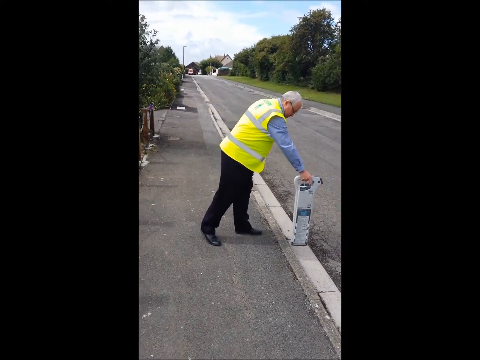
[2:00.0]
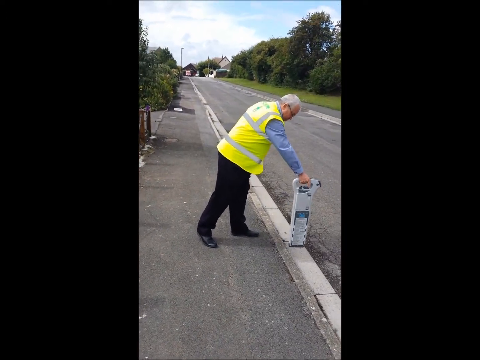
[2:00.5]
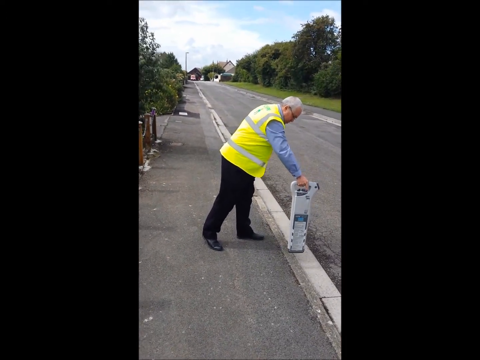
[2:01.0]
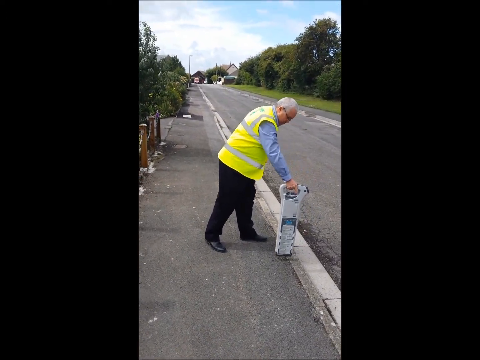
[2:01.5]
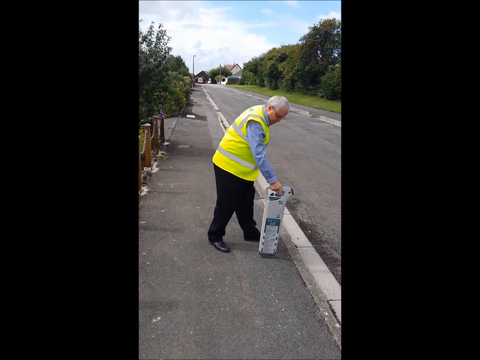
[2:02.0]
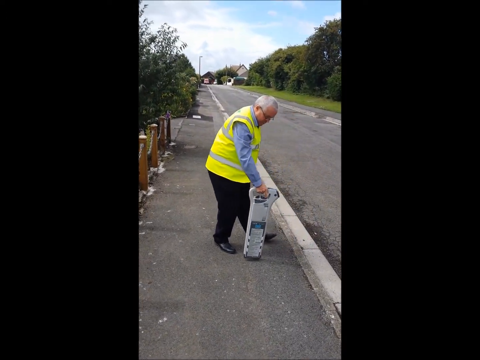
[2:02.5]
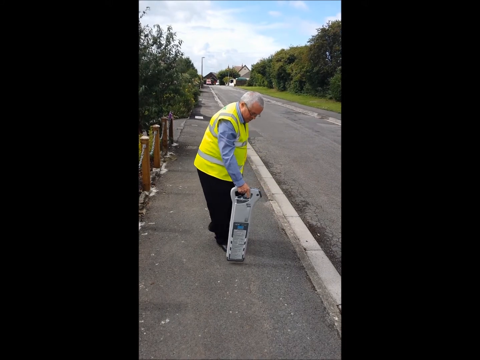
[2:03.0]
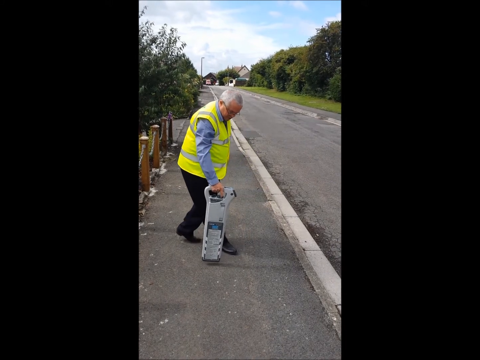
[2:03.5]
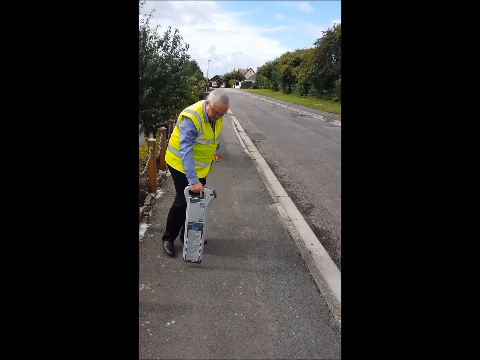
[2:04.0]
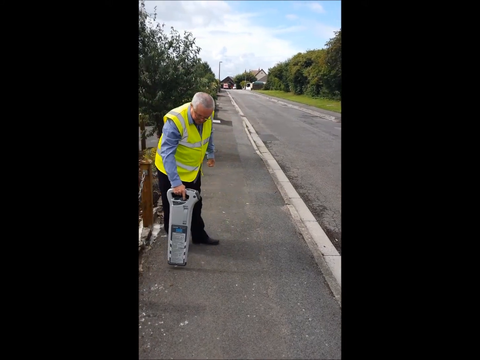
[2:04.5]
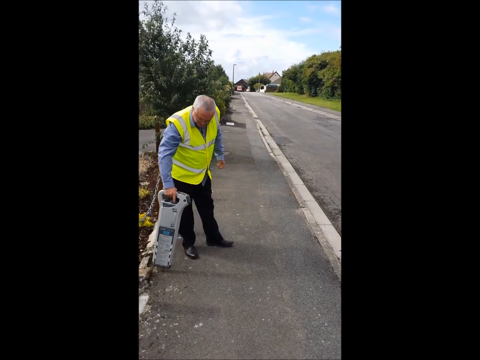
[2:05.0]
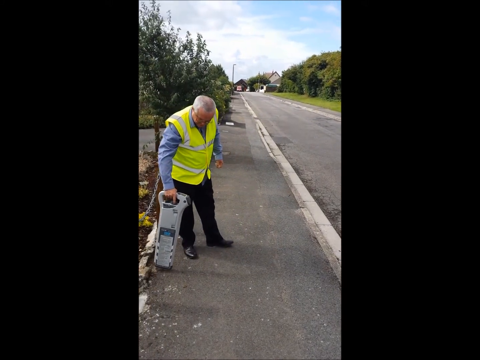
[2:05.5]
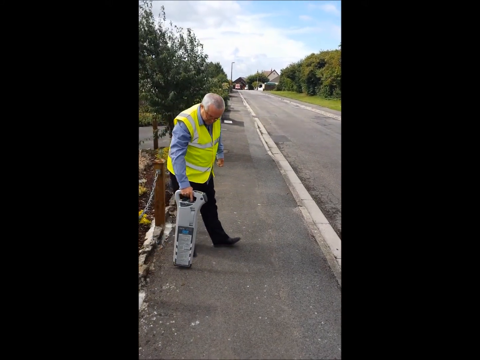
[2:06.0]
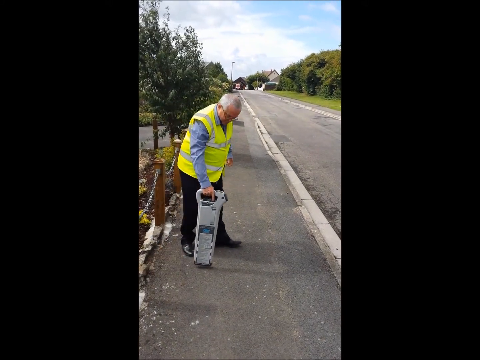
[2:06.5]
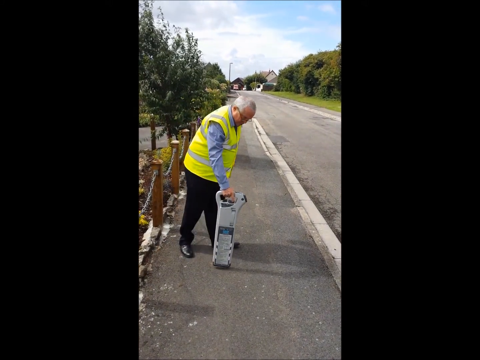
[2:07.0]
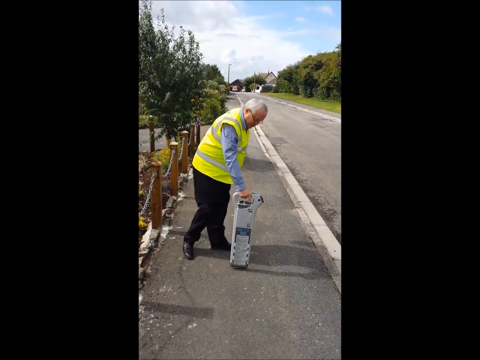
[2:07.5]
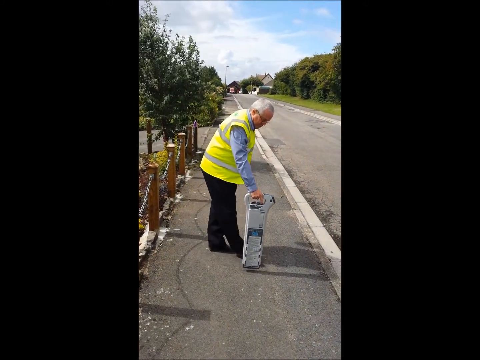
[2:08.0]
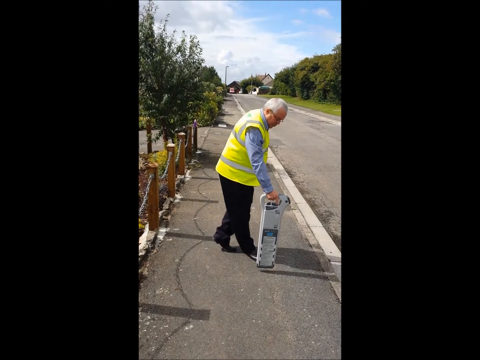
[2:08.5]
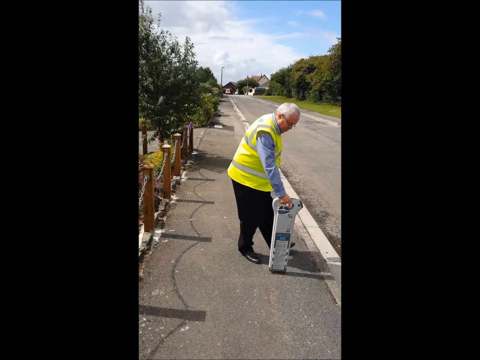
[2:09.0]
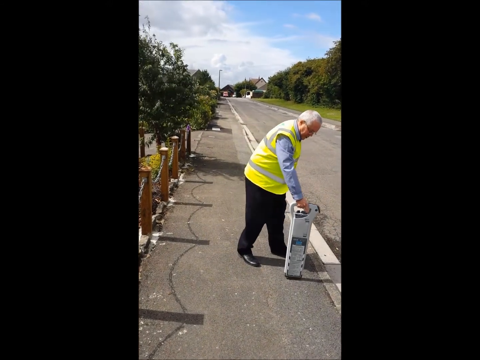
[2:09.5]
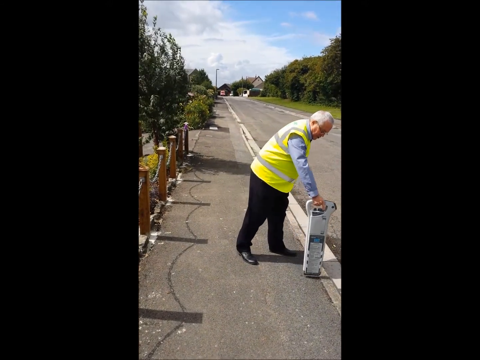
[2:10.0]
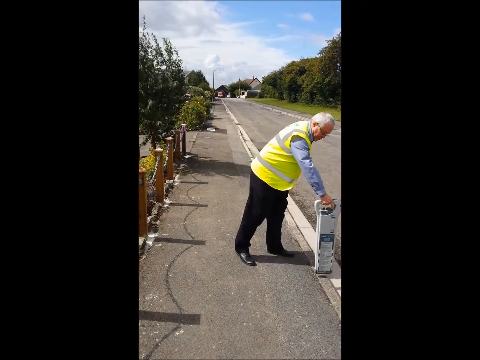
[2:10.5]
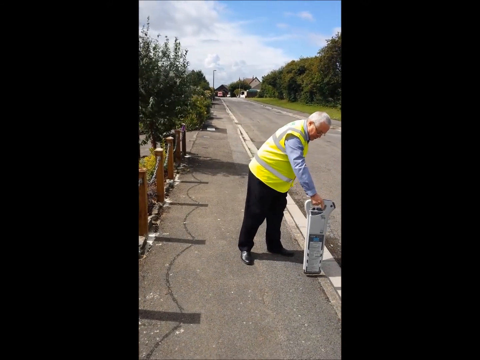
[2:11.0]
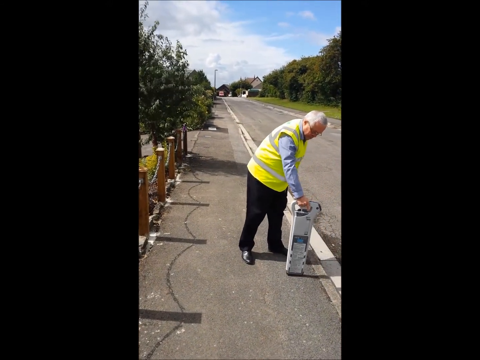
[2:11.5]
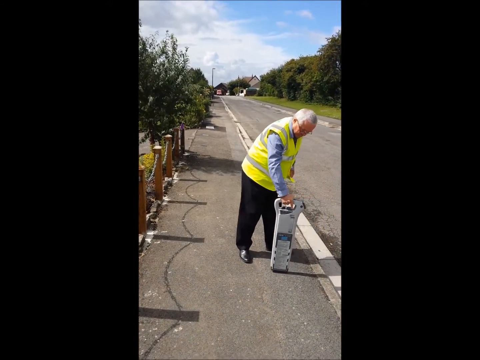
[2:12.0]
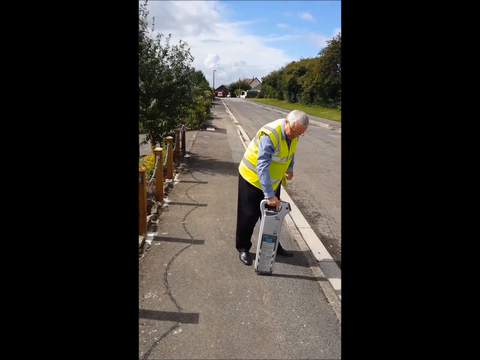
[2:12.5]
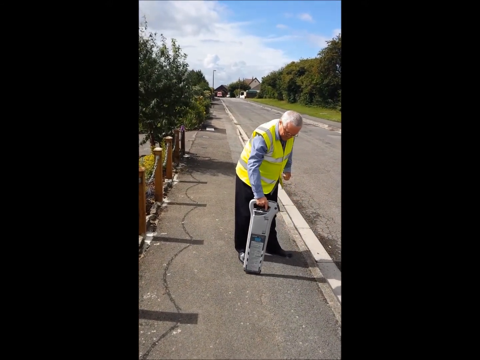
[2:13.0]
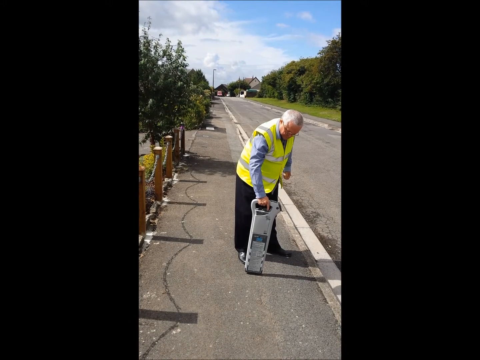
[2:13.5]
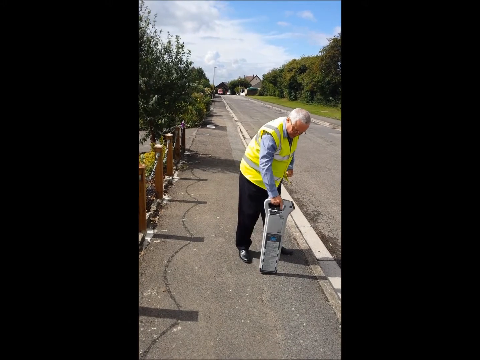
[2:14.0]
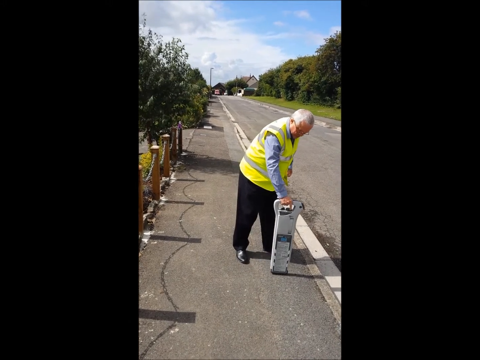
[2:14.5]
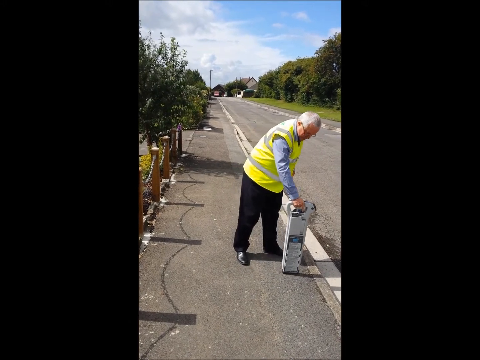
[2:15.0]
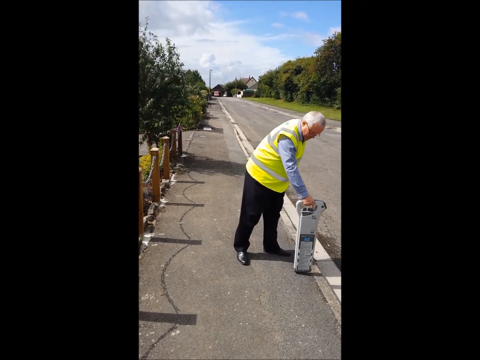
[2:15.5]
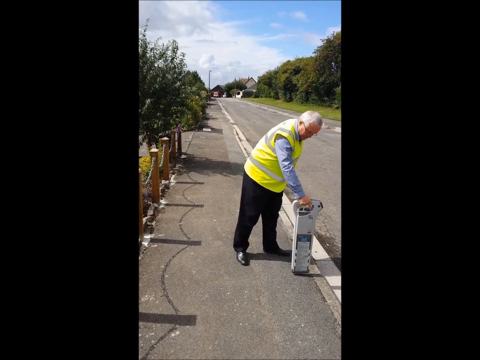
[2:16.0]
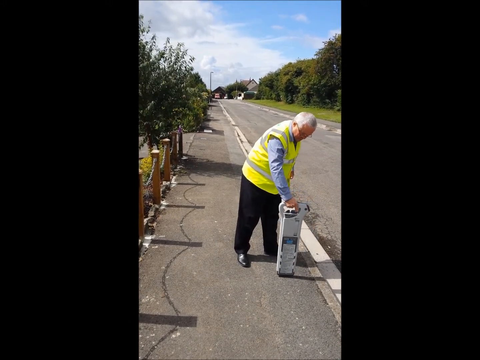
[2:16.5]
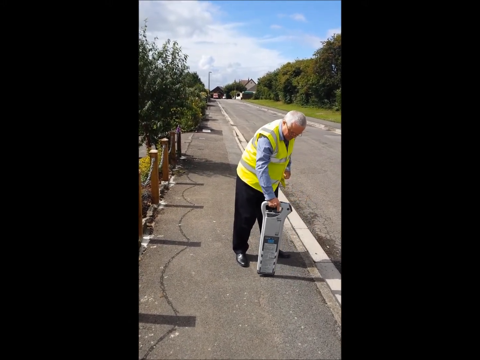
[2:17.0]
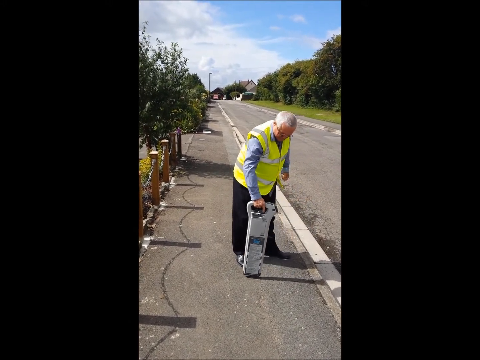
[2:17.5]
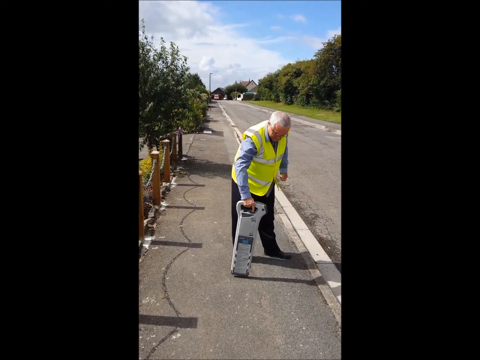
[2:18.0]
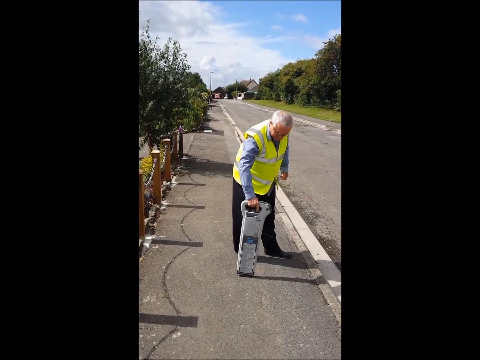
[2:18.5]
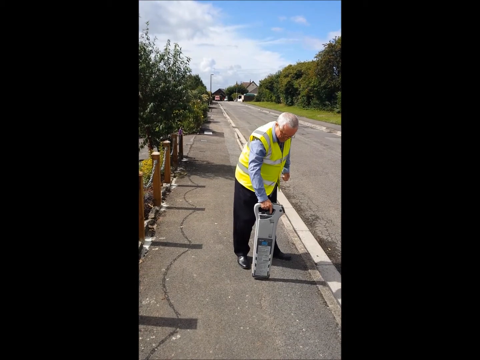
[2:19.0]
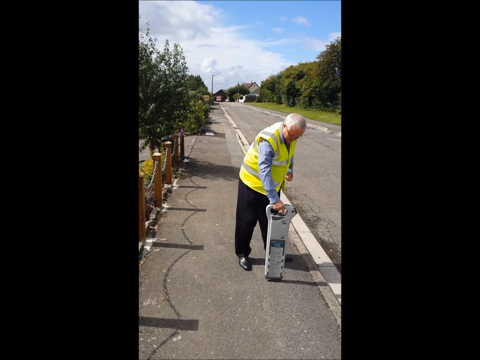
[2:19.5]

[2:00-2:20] A man in black pants, black dress shoes, a light blue dress shirt, and a protective yellow vest with gray reflector strips stands near the white line of a road. He watches and checks the digital results of a power mode C-scope detector as he moves it over the road, held kind of vertically beside him, moving it back and forth and touching the road. Bushes are behind him, and there are no cars on the road. Posts in the ground are connected with chains that swing down and back up, forming a kind of divider. On the right is a grassy area with lots of trees, with houses up ahead and a blue sky at the top with white fluffy clouds and a few gray ones.